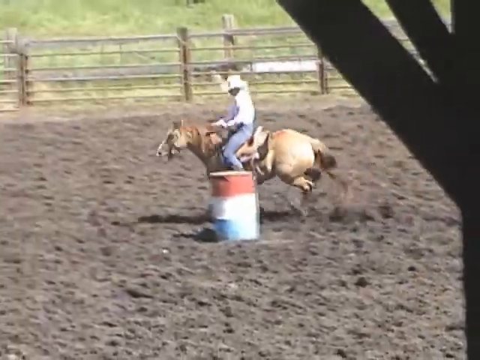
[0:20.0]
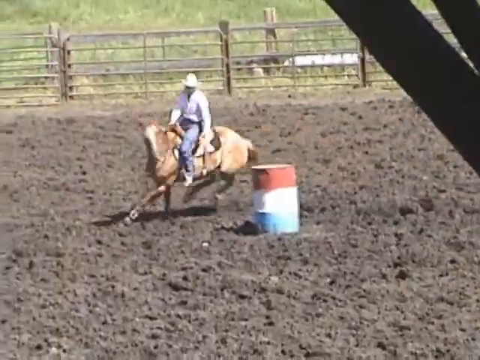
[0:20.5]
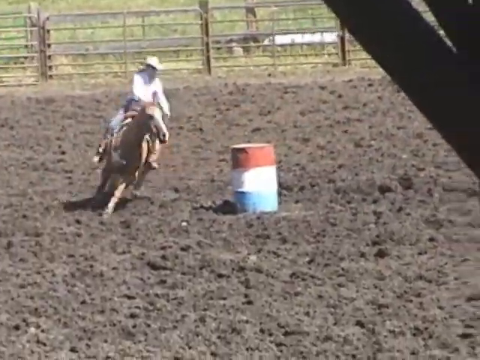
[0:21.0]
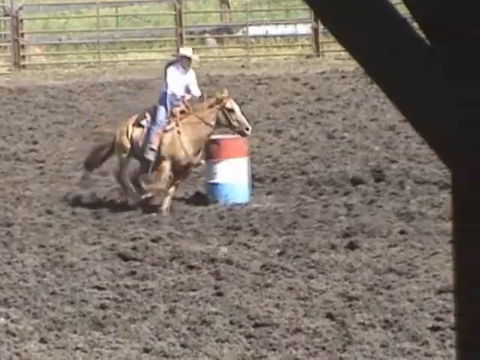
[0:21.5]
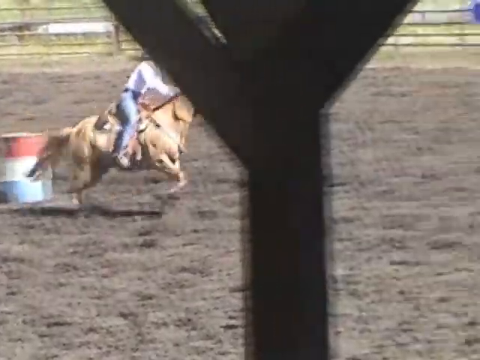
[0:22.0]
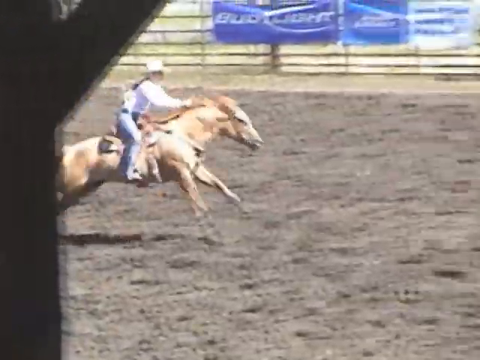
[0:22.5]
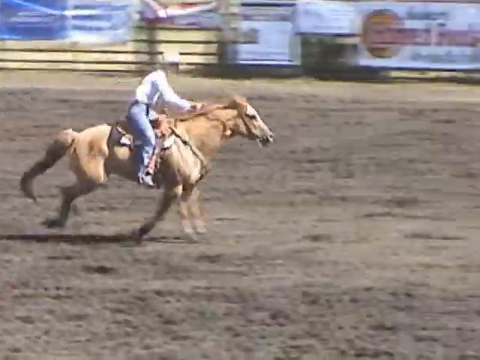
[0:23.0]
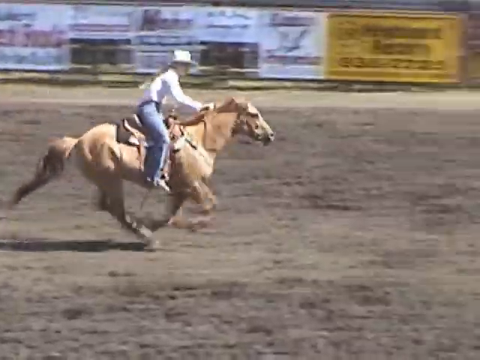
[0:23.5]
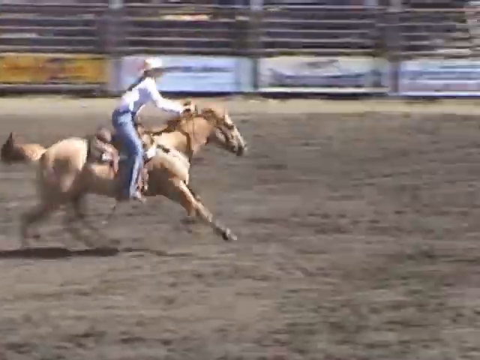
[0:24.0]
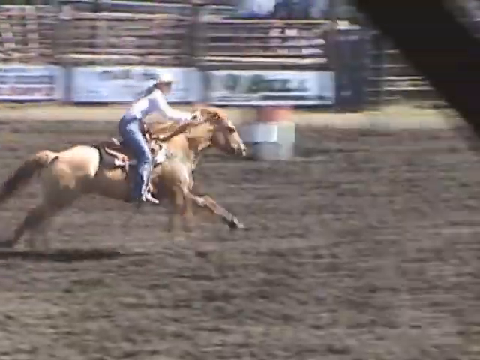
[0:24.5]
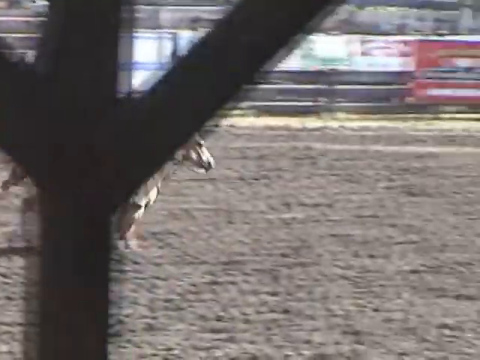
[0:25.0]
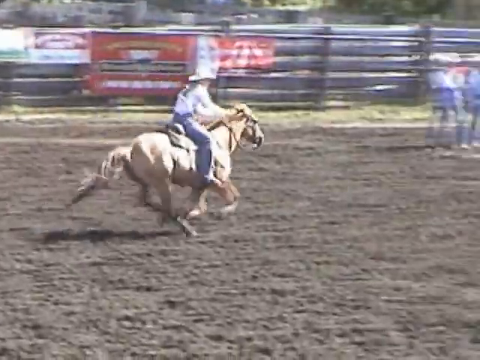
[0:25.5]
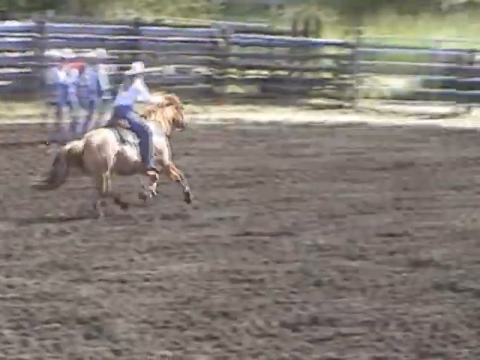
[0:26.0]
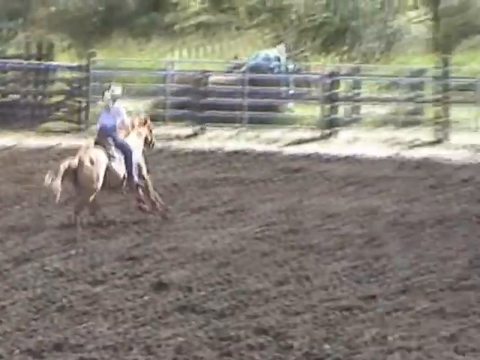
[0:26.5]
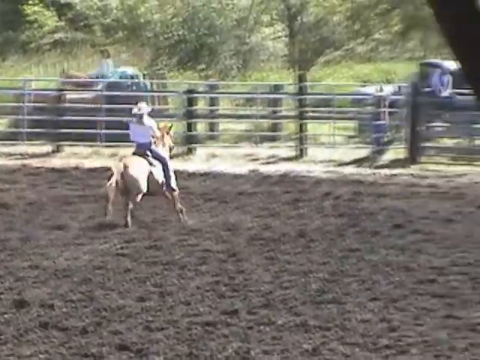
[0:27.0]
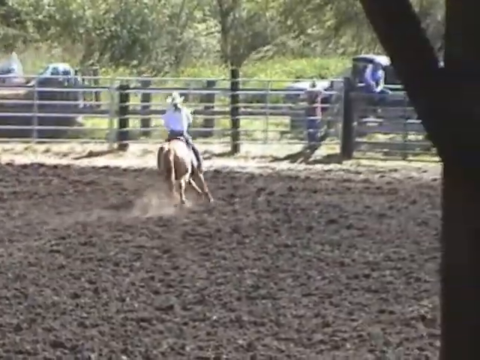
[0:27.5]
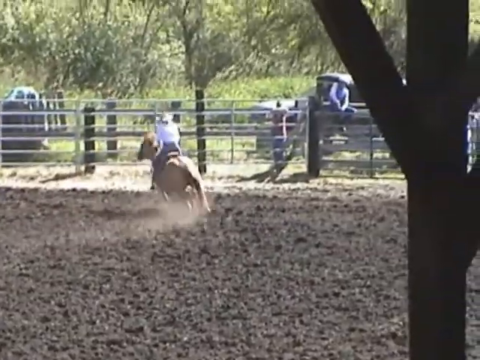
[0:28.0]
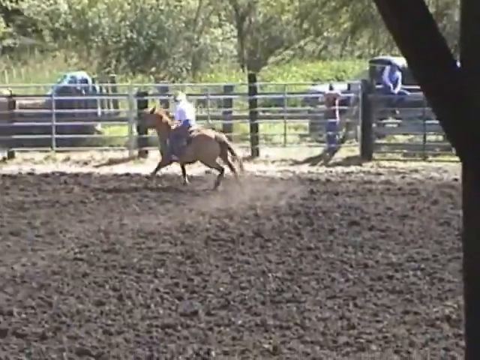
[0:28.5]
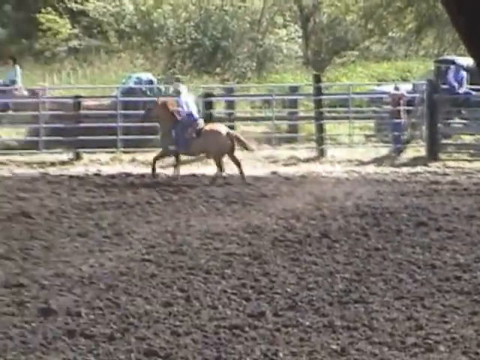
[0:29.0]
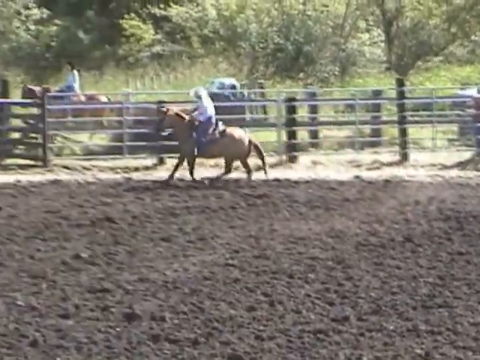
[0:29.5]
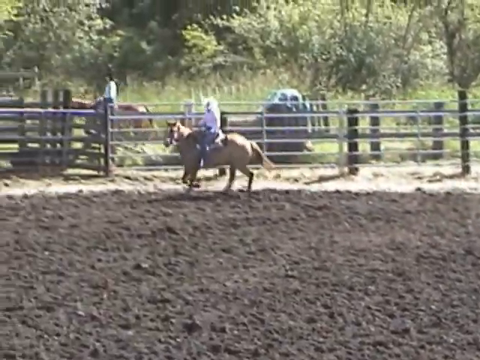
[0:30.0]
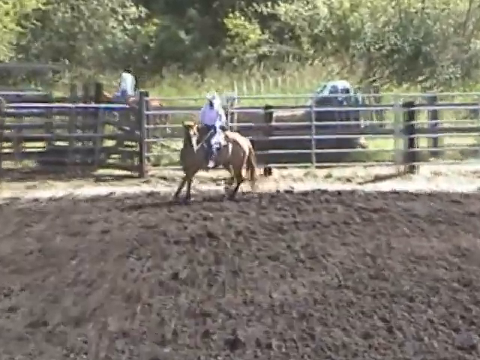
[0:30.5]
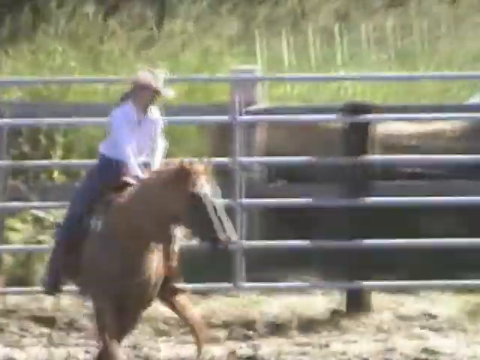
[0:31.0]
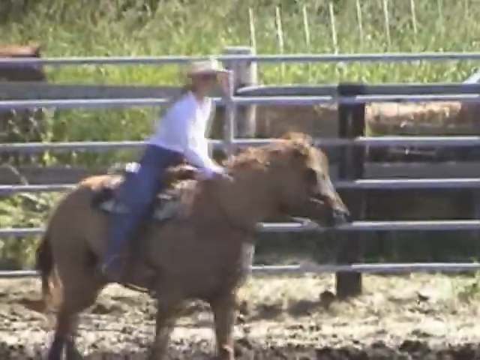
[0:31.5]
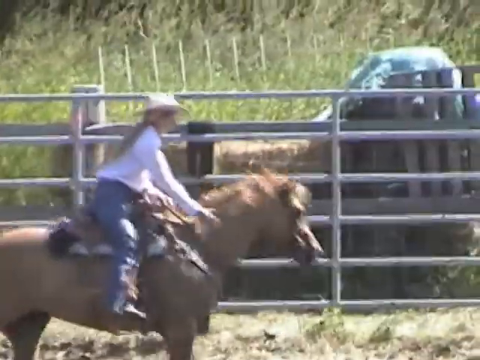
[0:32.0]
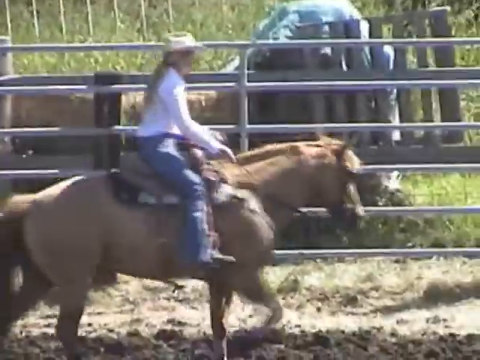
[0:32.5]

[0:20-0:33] A woman rides a horse, preparing for a rodeo by riding around barrels; at the start she rides around one barrel. The barrels are like petrol barrels, probably empty, with red, white and blue stripes. The rider wears a kind of broad-brimmed hat, a long-sleeved white shirt and denim jeans, with her feet in the stirrups. The horse is light brown with a darker brown tail and a dark brown mane, and it moves rapidly between barrels, riding from one to the next. After turning around the barrel, the horse gallops to the right, approaches the fence, turns left and stops. The rider pats the horse on the neck. There are some people in the background, some beyond the fence. One person seems to be inside the same enclosure, which seems to be a rodeo enclosure but a training one, since there are no stands, although there is some advertising on the inside of the fencing. Behind the fence, someone else on a horse rides past slowly.